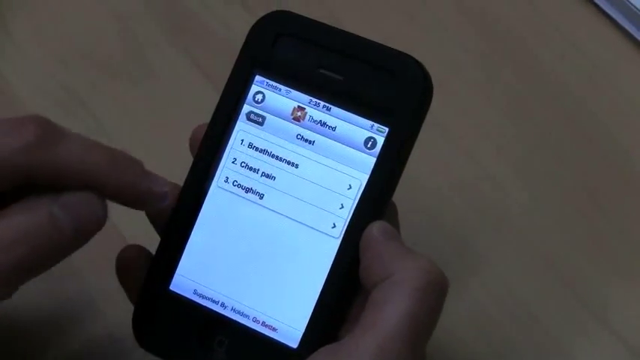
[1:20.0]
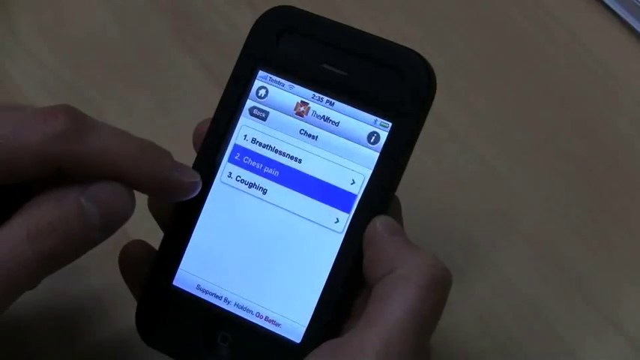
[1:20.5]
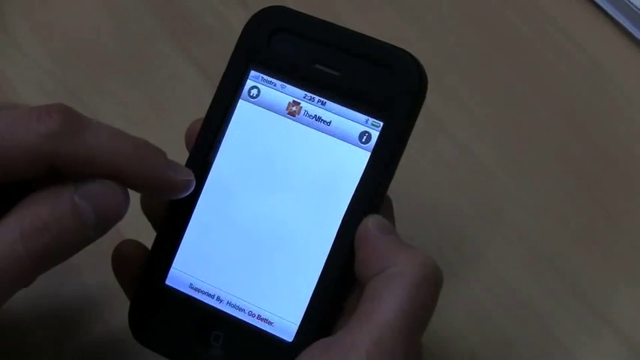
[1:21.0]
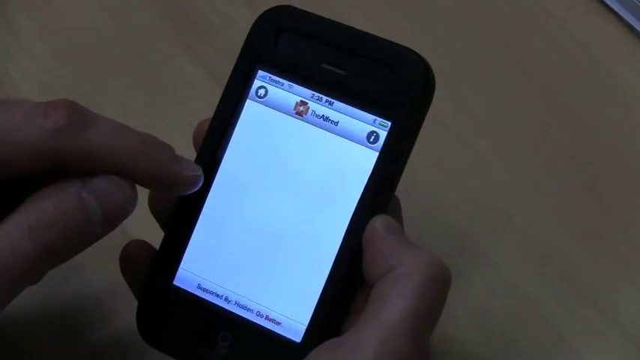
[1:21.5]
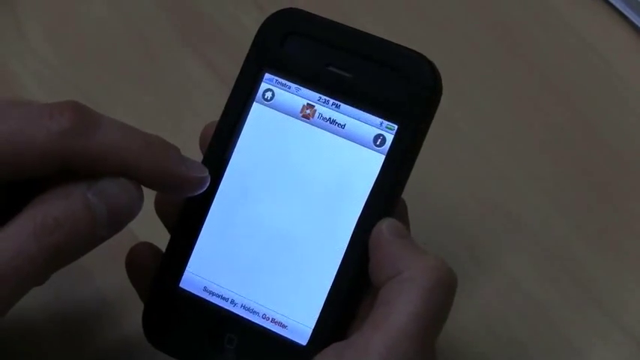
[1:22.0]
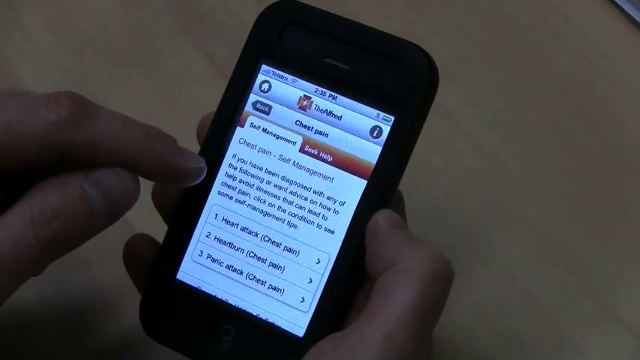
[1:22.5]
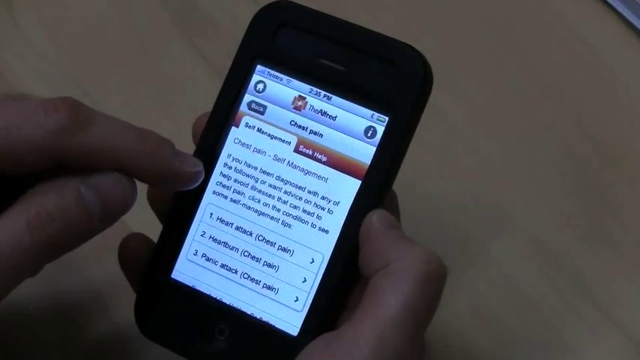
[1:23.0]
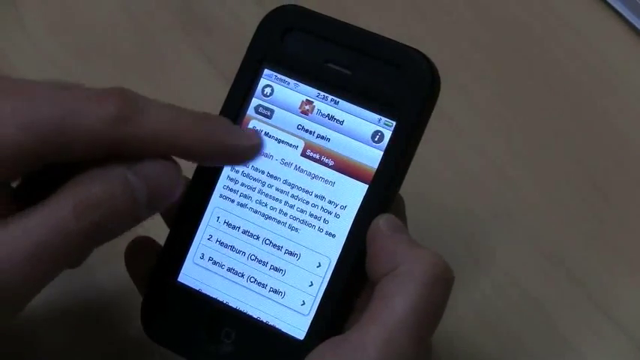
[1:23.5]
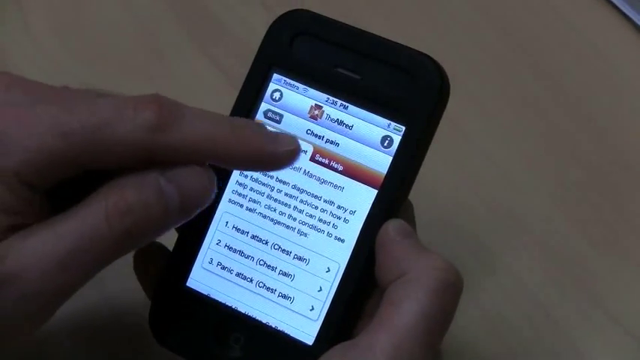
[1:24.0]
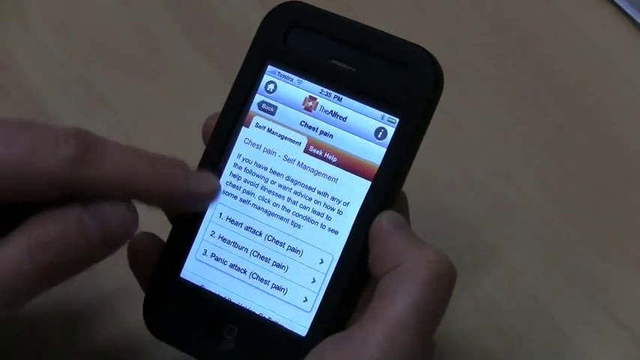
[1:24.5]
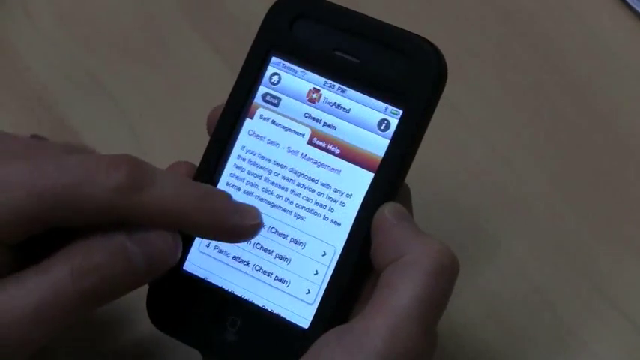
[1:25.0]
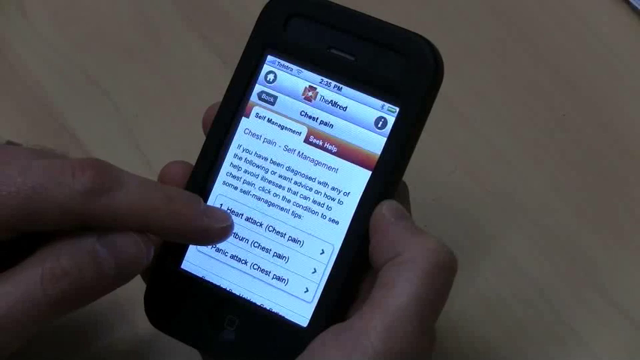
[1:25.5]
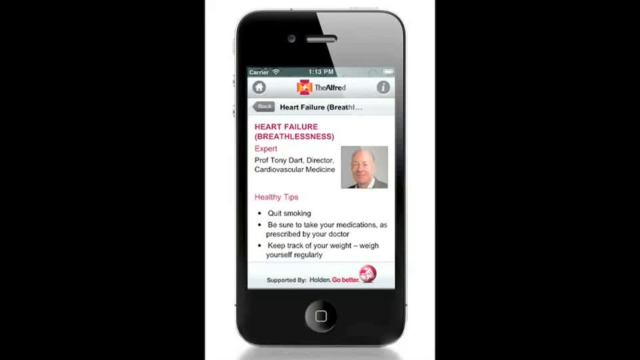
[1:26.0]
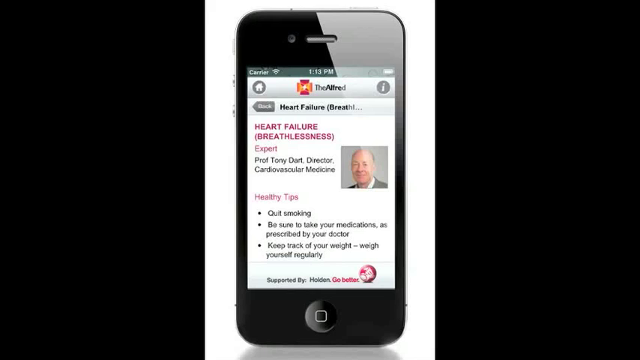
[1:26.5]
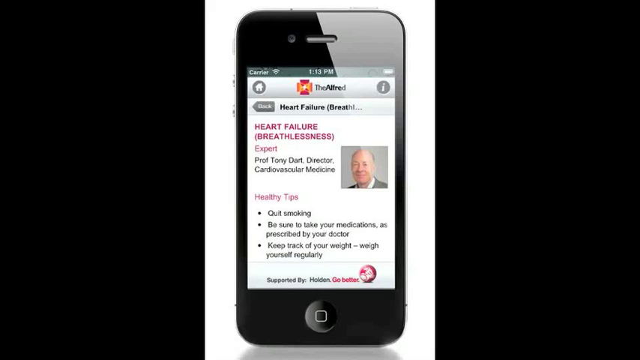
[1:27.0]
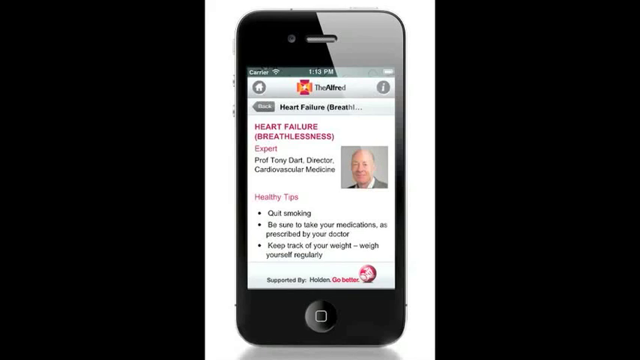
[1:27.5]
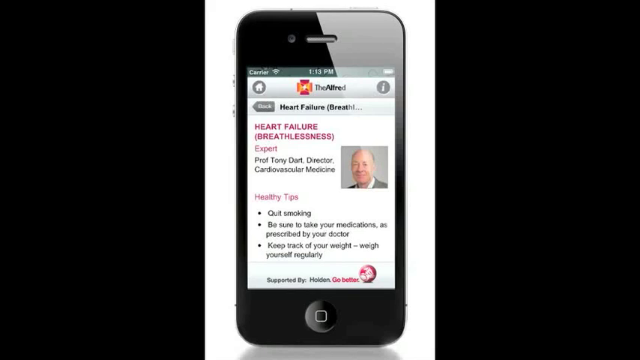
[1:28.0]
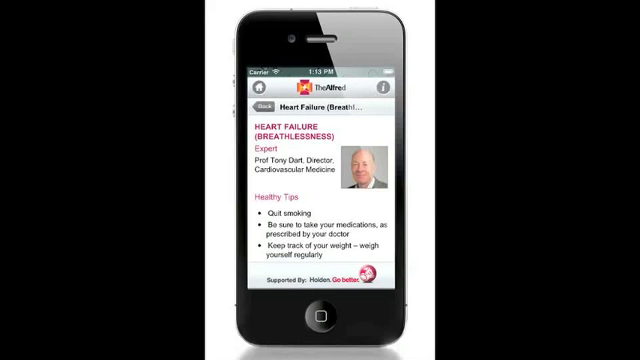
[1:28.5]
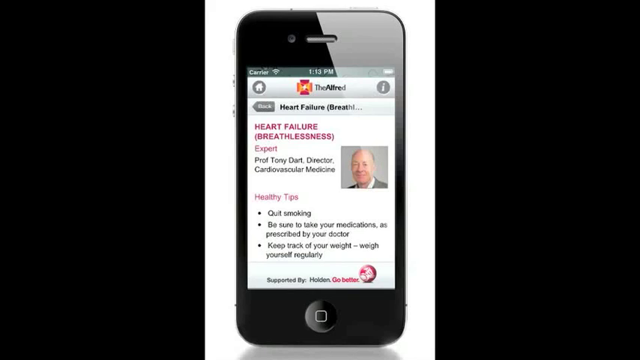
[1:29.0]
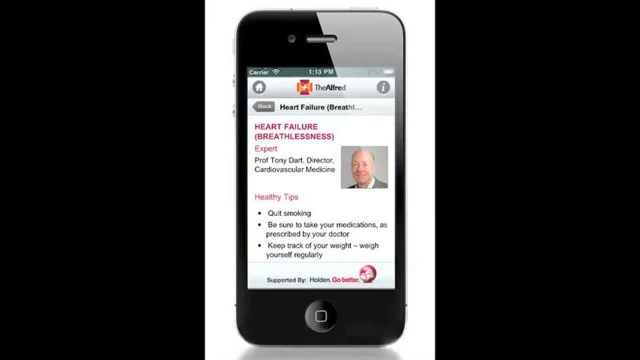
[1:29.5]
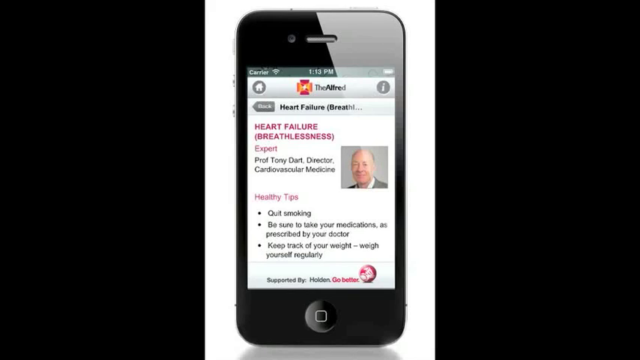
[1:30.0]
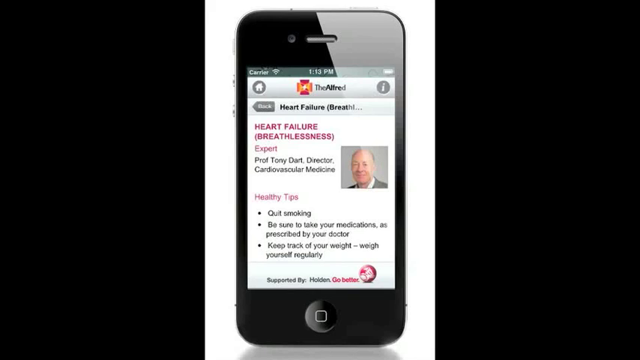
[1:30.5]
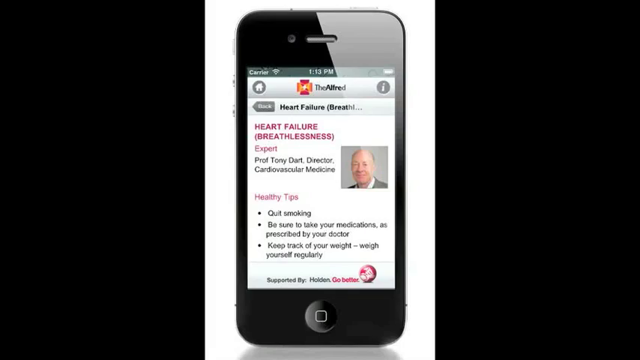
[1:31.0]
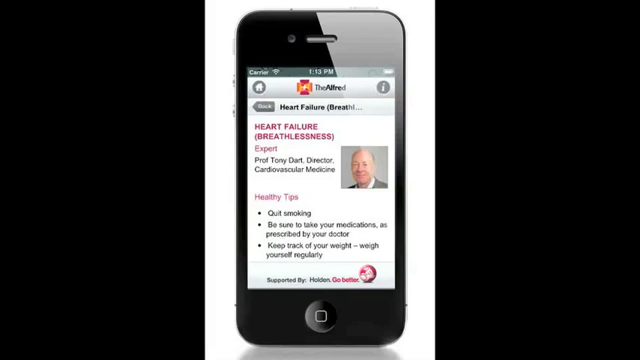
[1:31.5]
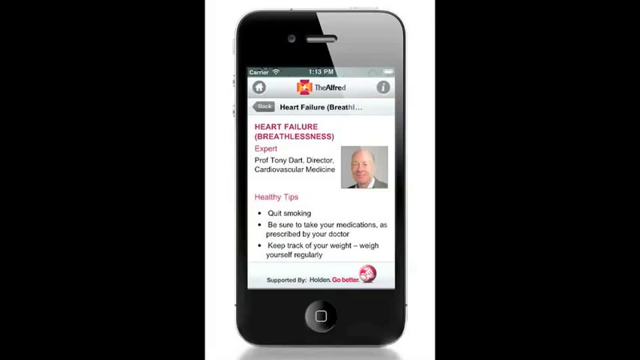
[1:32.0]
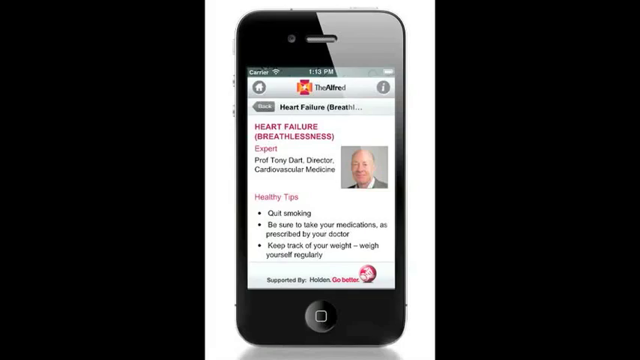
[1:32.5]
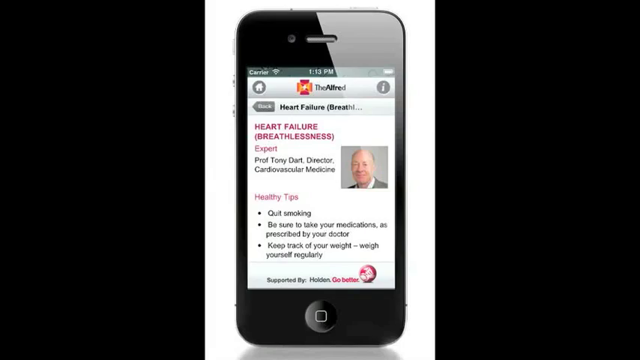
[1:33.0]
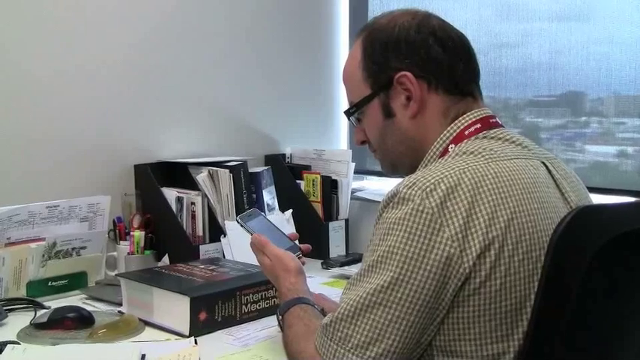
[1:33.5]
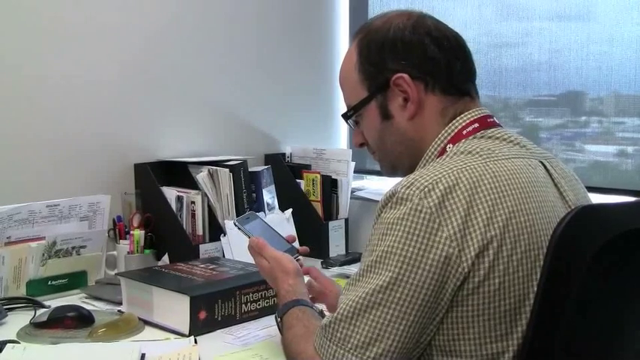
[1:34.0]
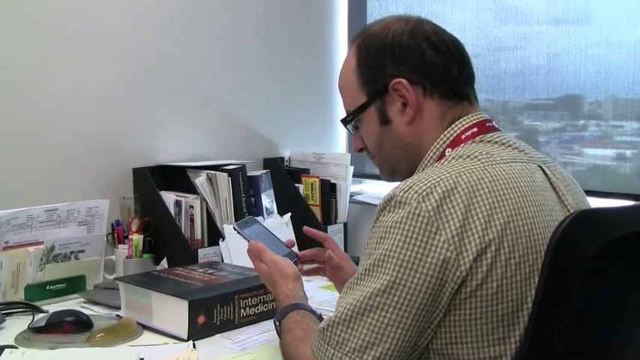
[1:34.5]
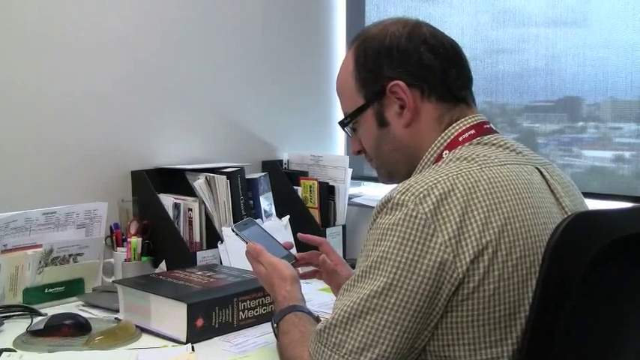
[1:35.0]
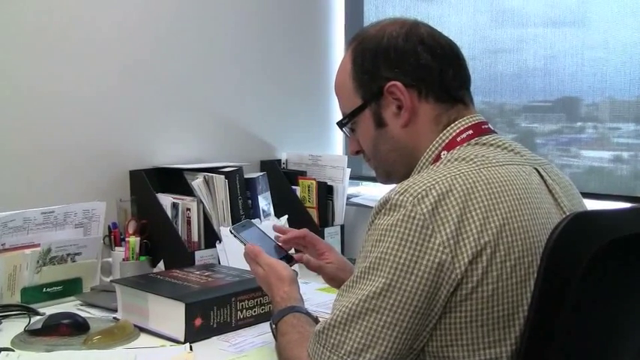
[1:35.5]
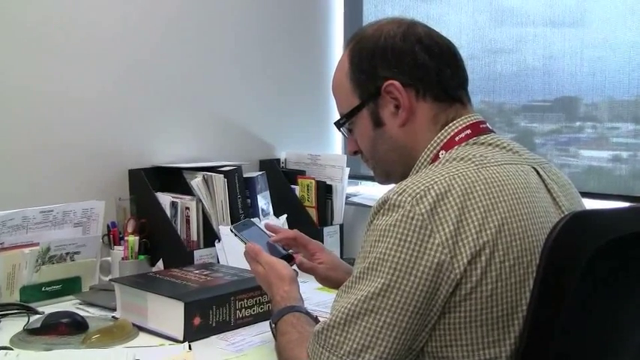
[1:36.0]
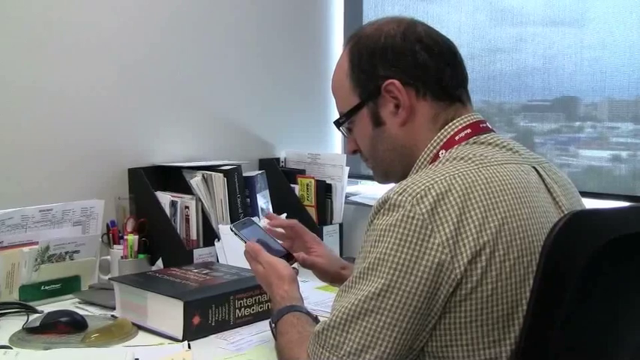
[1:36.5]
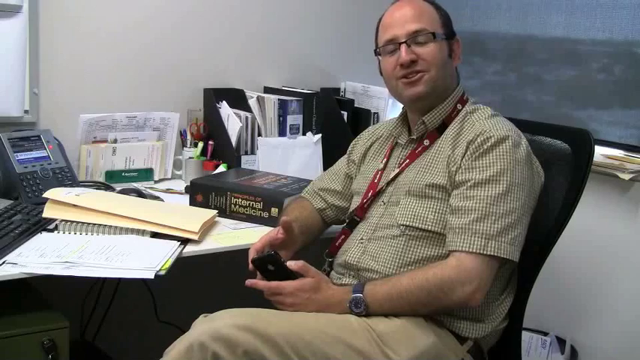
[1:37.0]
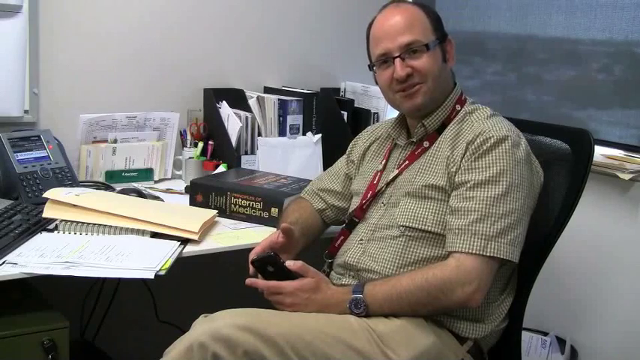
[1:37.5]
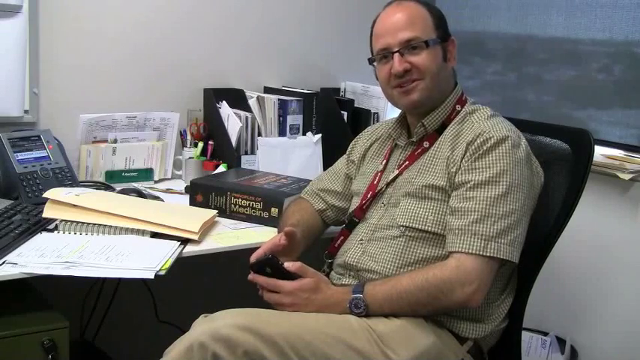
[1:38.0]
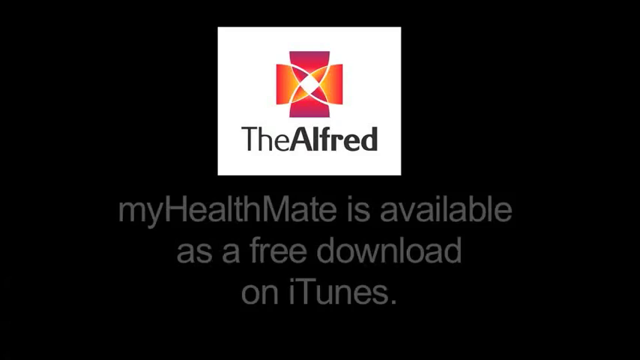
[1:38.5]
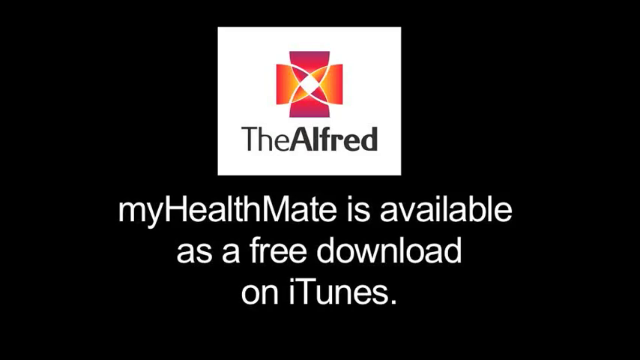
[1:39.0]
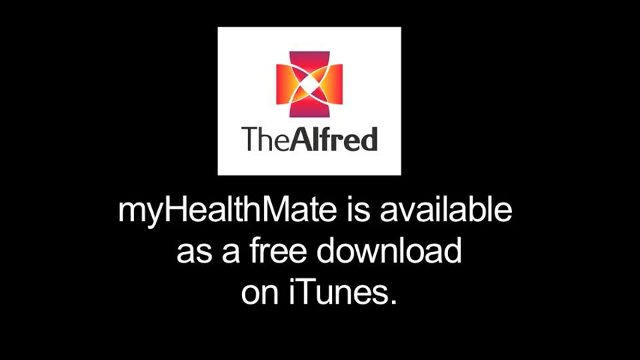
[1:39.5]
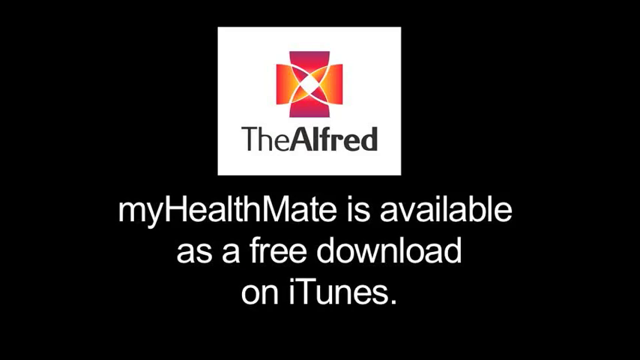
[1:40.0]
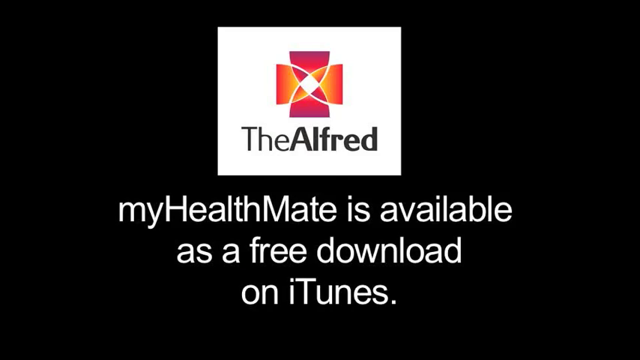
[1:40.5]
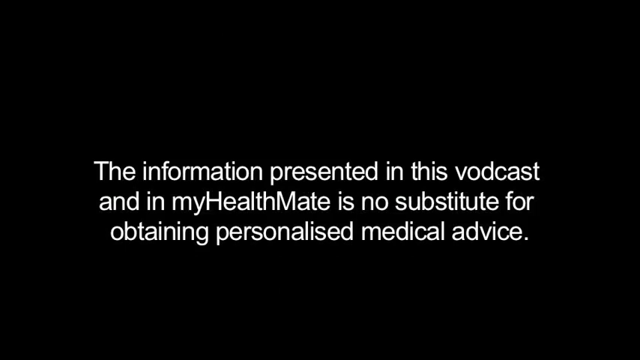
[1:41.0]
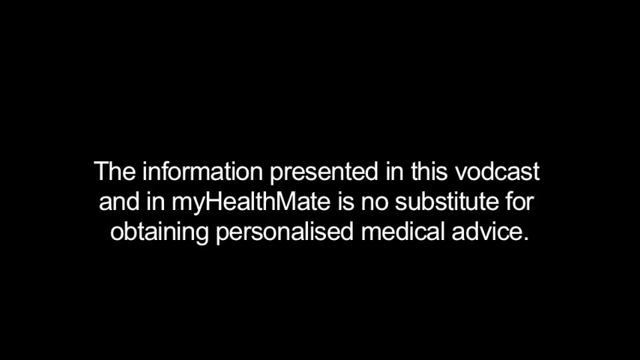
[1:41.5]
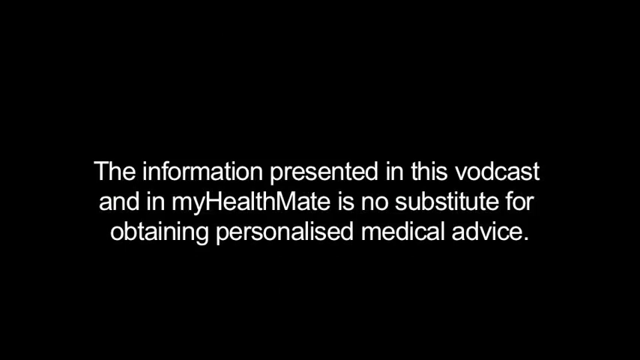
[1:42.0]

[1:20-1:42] An overhead view shows a person's hands holding a black phone. At the top middle of the screen is the Alfred name, with a small icon to its left that looks like a weird plus symbol; to the left of that is a home icon like a house, and to the right is a little eye icon. Below, the word "chest" appears at the top middle, and underneath is a rectangular box split into three categories: "breathlessness", a second box with a number two reading "chest pain", and "coughing", each with a small right arrow to its right. The person holding the phone has a white skin tone and uses their left pointer finger to point at the app, then clicks one of the options, the heart attack option. The scene changes to a static image of the same Alfred website shown on a phone. At the top middle is the name "heart failure". Further down, pink writing reads "heart failure, breathlessness, expert", and black writing reads "Professor Tony Dart", with an image of him in a small square box to the right; he has a white skin tone and looks elderly. Below that is a healthy tips section in pink, with three bullet points in black writing: "Quit smoking", "be sure to take your medications as prescribed by your doctor", and "keep track of your weight. Weigh yourself regularly". Finally, the scene changes back to the man sitting in the chair.